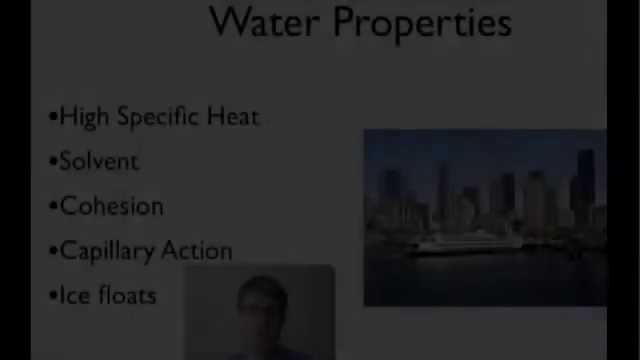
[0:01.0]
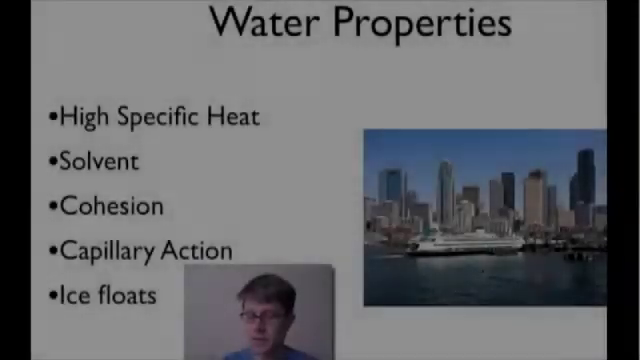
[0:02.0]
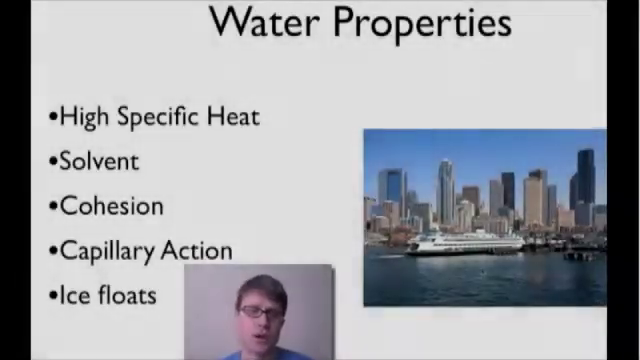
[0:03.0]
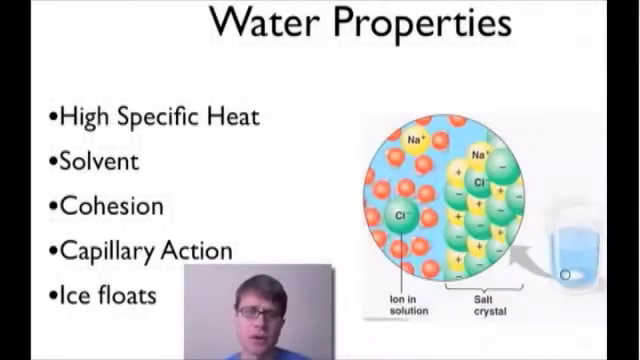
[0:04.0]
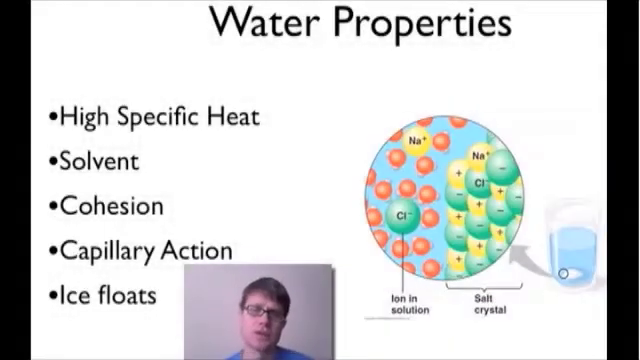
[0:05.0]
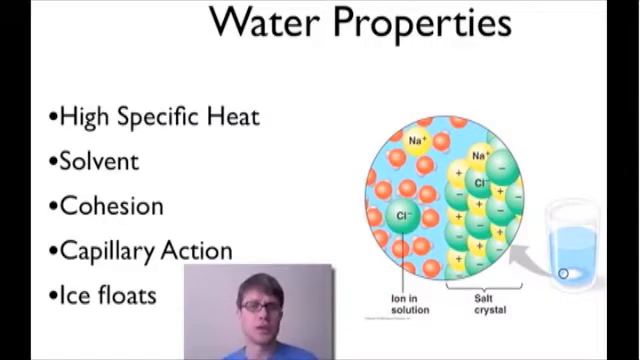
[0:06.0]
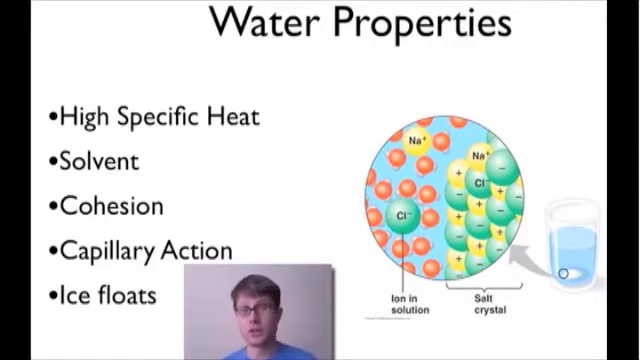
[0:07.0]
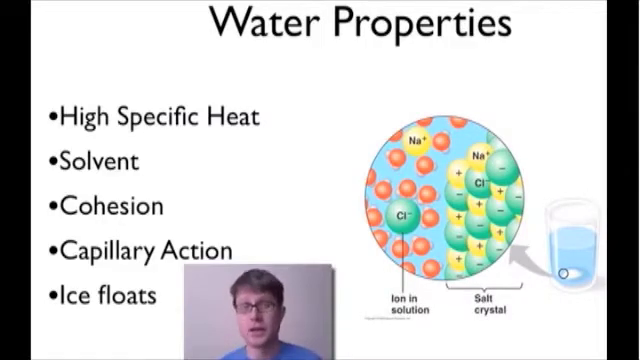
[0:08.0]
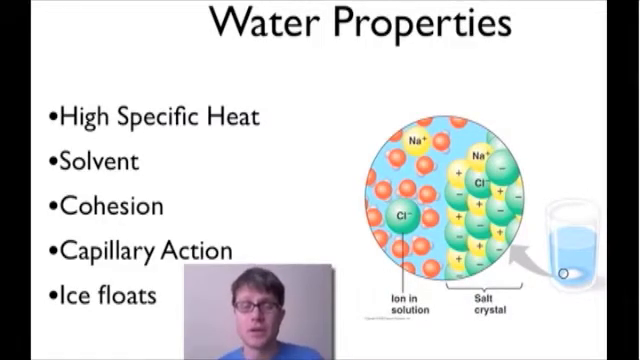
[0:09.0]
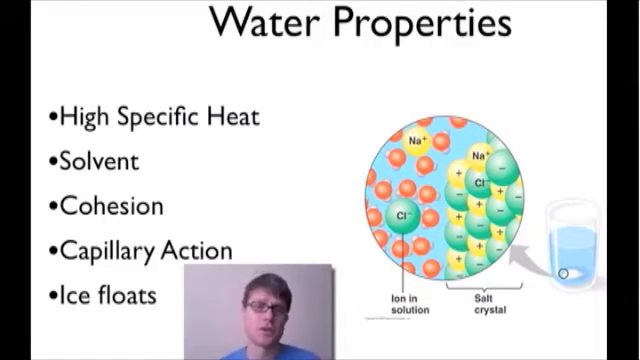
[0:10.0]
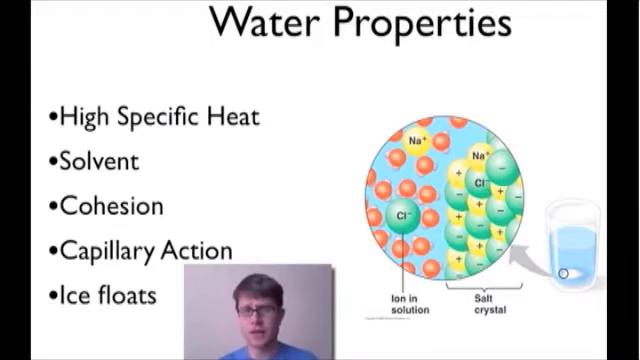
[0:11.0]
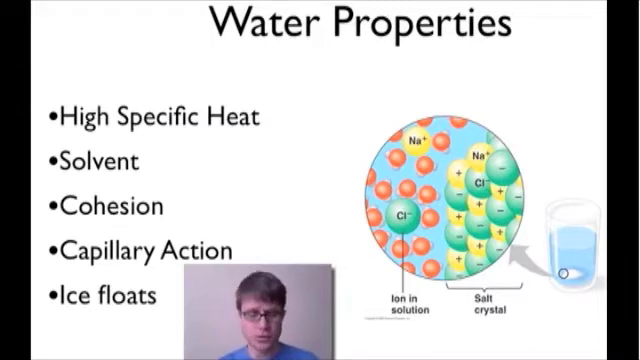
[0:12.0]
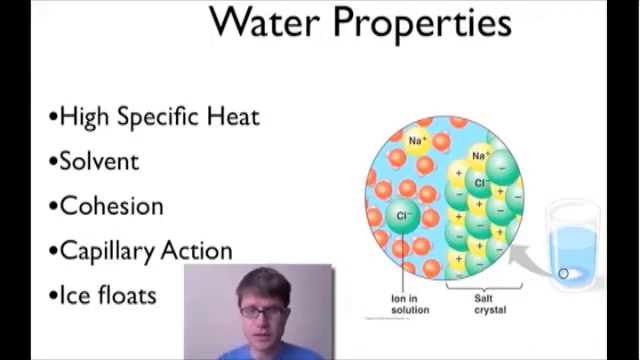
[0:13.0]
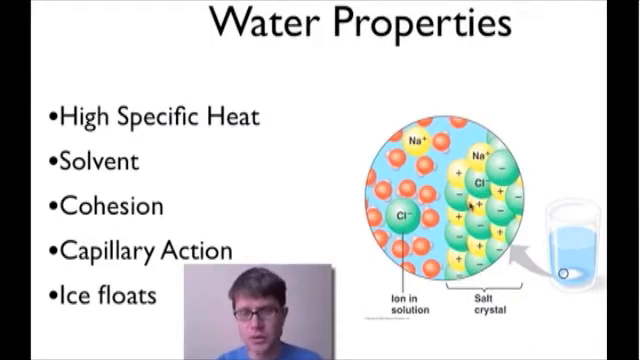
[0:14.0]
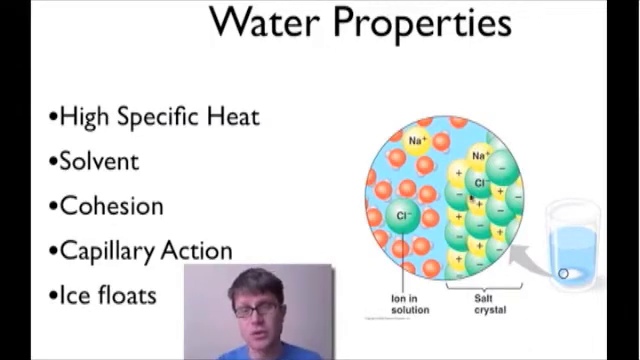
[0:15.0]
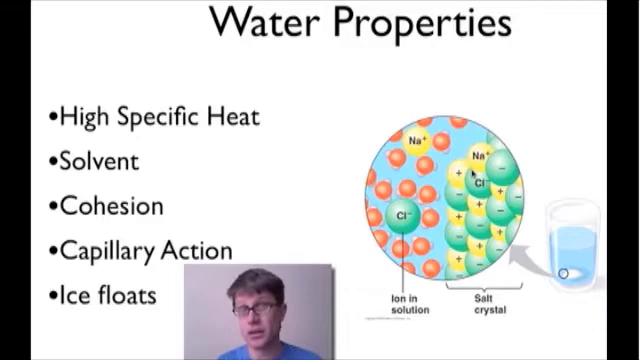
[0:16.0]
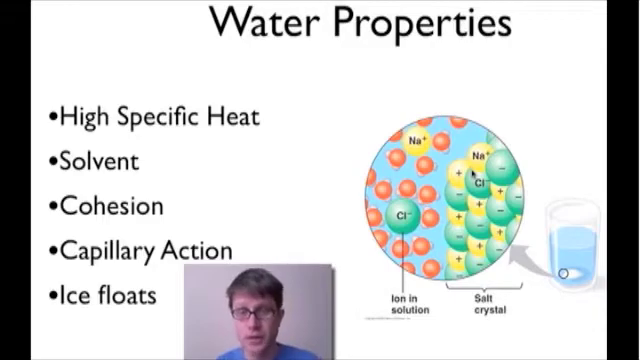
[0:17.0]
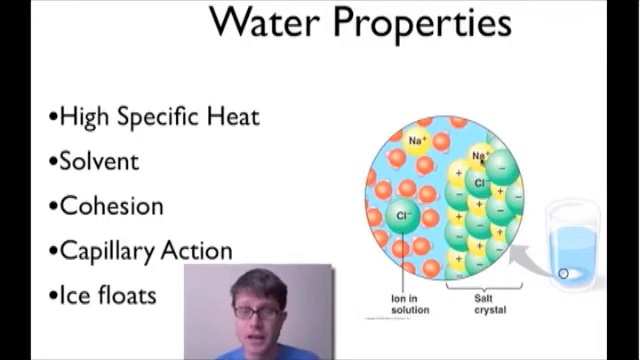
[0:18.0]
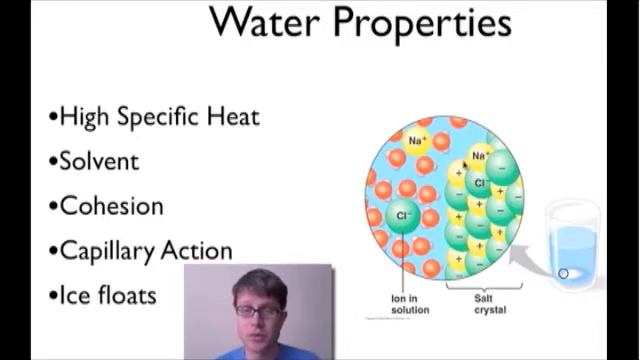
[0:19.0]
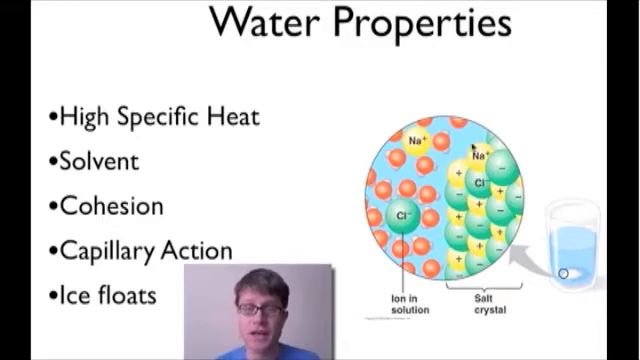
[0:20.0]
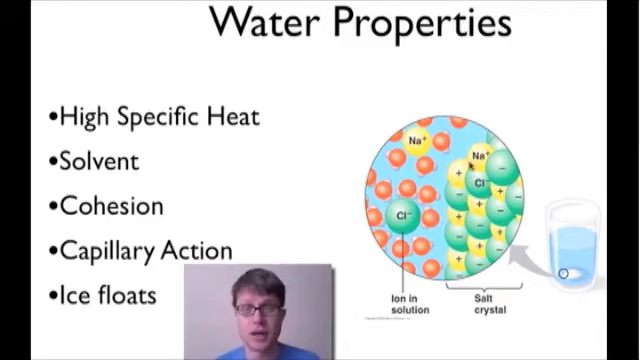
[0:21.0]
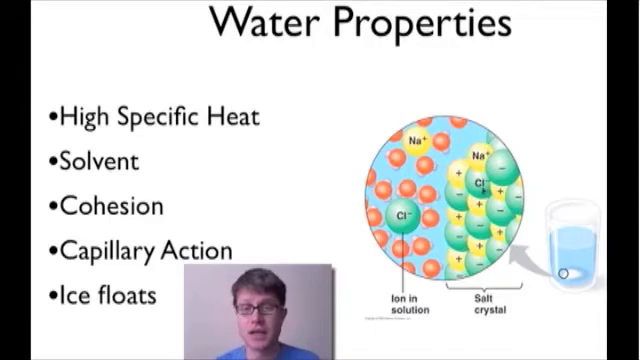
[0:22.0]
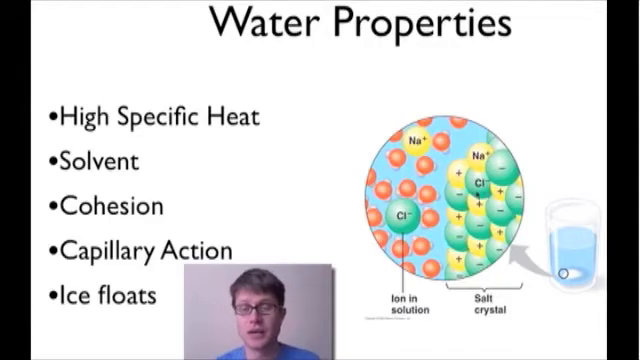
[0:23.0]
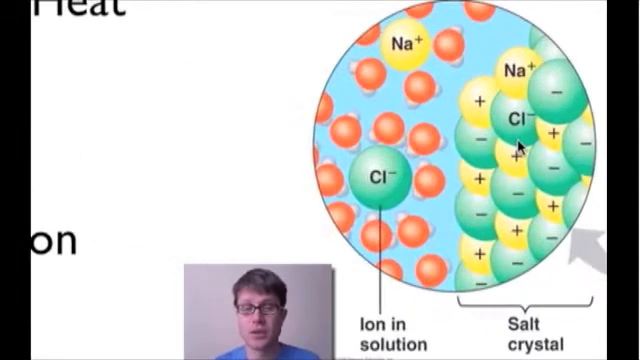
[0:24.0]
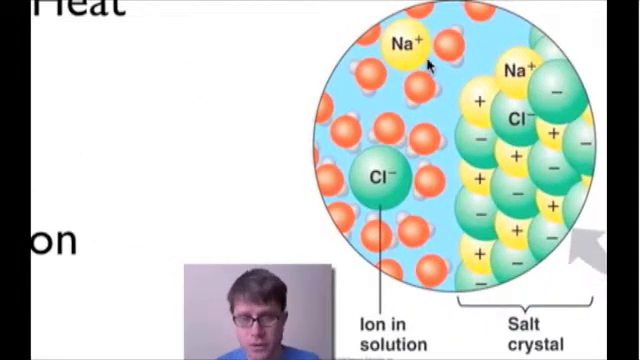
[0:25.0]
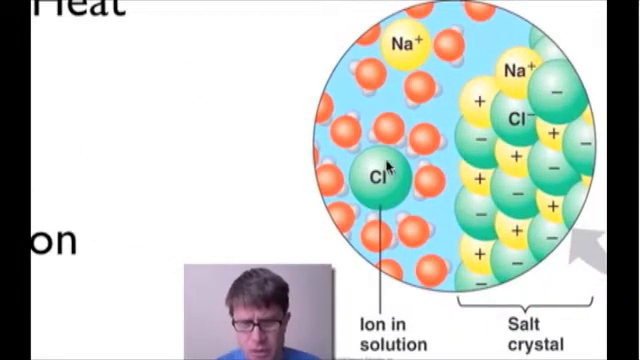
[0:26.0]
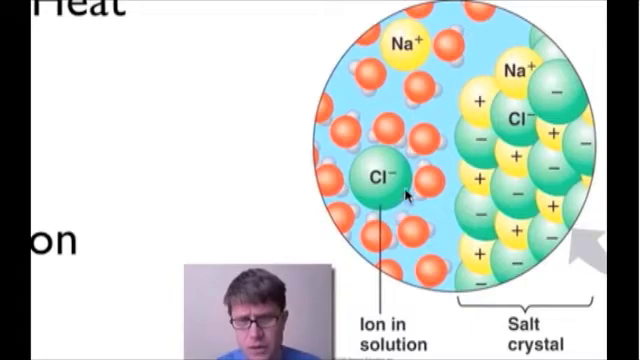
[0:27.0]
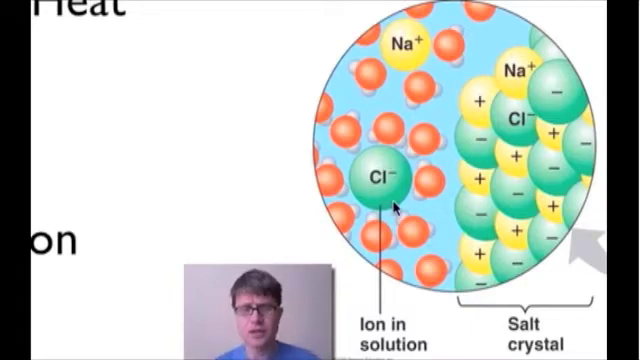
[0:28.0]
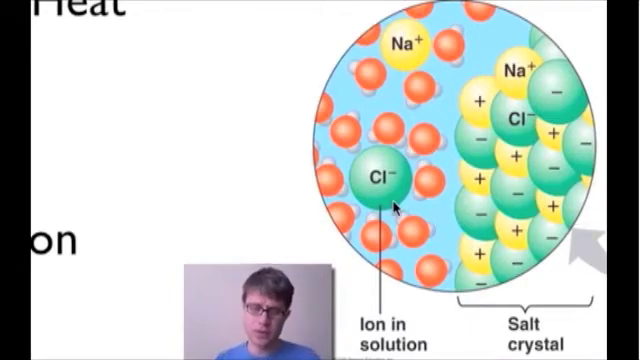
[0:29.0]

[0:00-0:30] The video opens with the title "water properties" and a list: high specific heat, solvent, cohesion, capillary action, and ice floats. A person speaks in the lower portion of the frame. Salt crystal and ion in solution are shown: a round circle with ions inside, labeled NA, with green ones and smaller orange ones, and plus and minus signs. One is shown close up, and a cursor moves around the green one. A picture of a city appears, followed by the picture of the ions, this time with a water glass next to it and a gray arrow pointing to the ion. The man at the bottom, who wears glasses and a blue shirt and has brown hair, continues to speak; it is unclear whether he is the one moving the cursor around the circles.